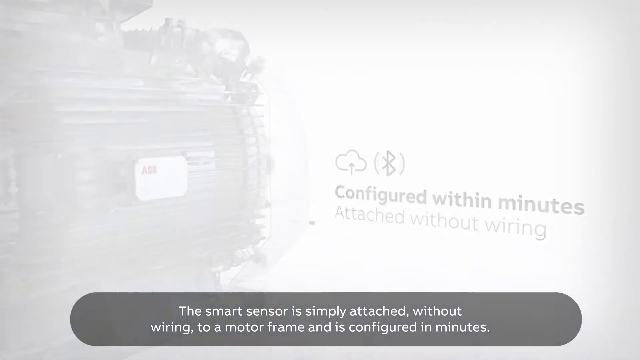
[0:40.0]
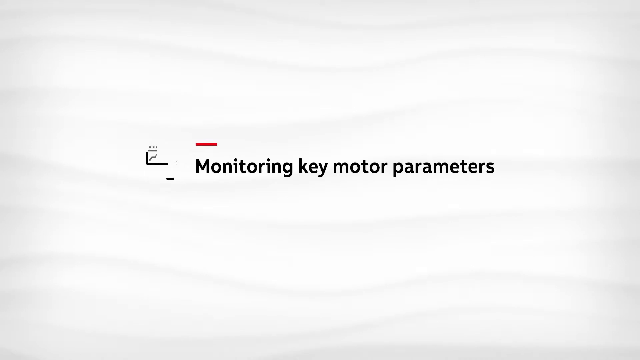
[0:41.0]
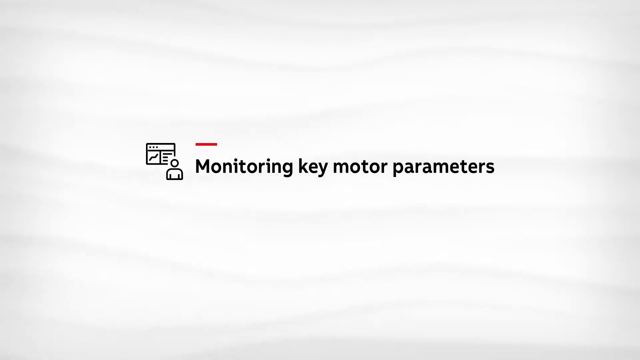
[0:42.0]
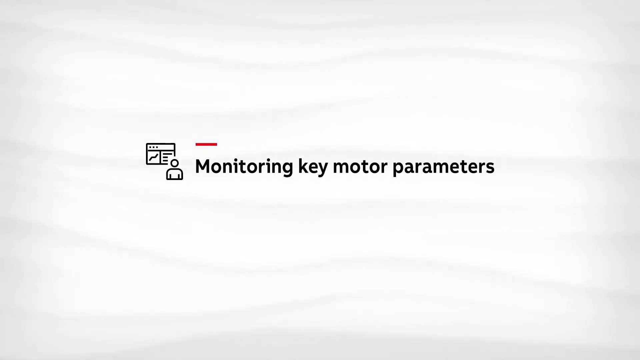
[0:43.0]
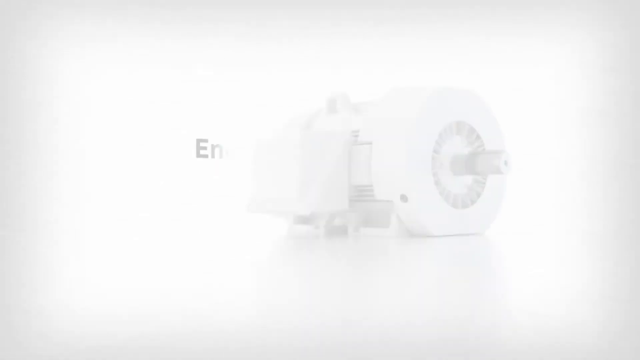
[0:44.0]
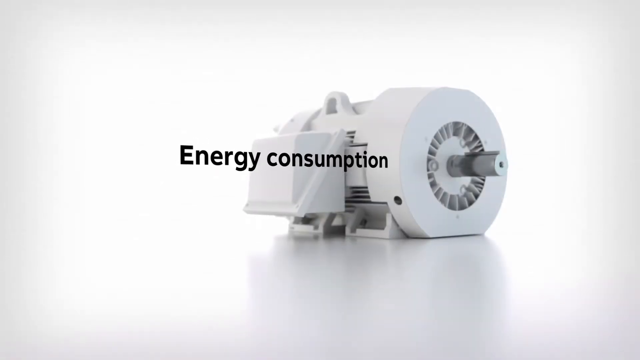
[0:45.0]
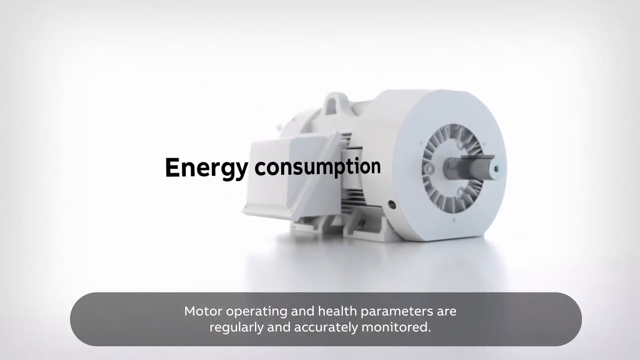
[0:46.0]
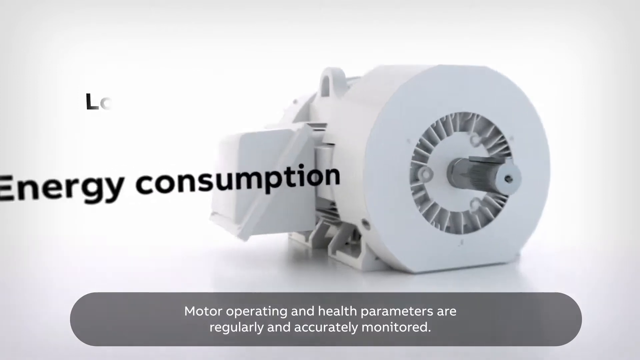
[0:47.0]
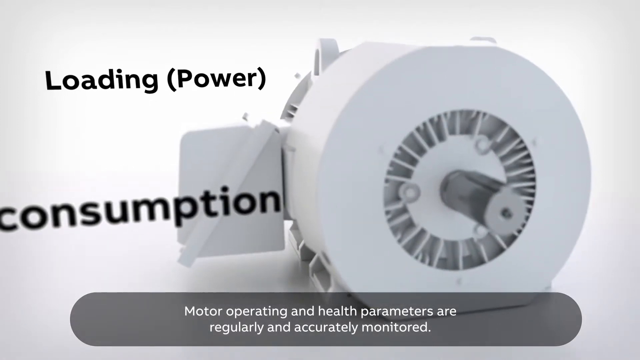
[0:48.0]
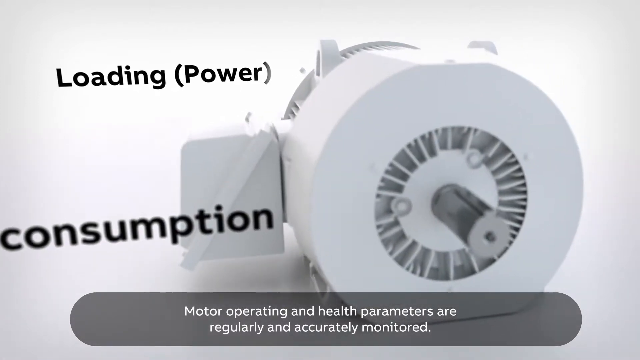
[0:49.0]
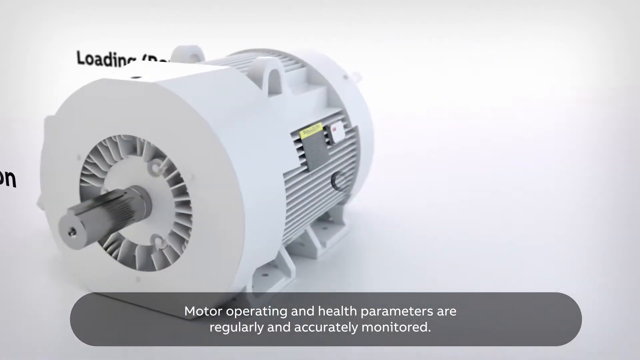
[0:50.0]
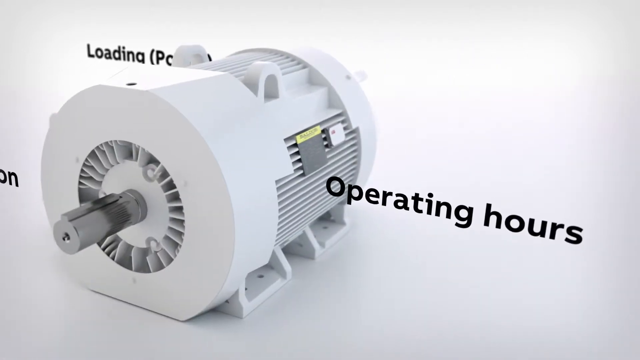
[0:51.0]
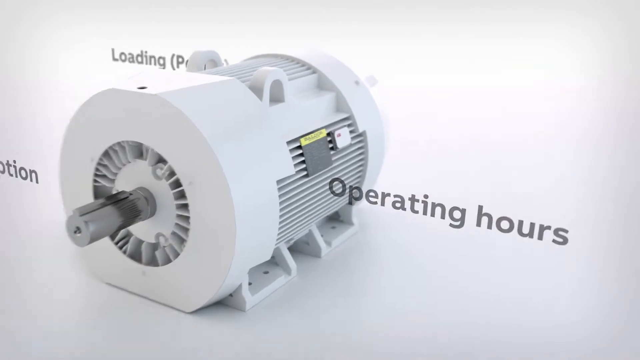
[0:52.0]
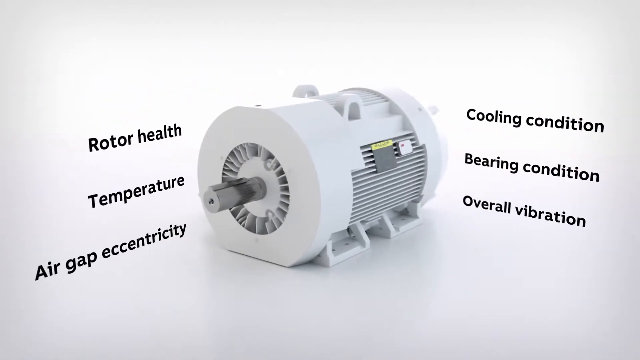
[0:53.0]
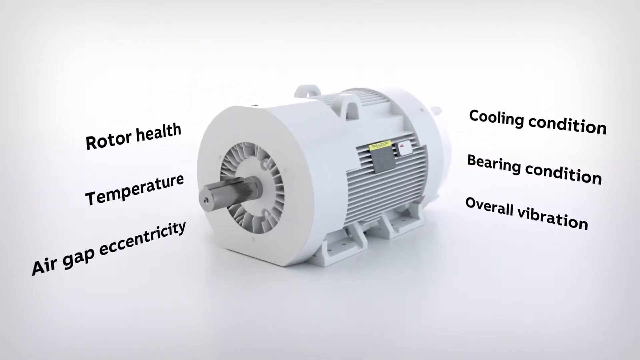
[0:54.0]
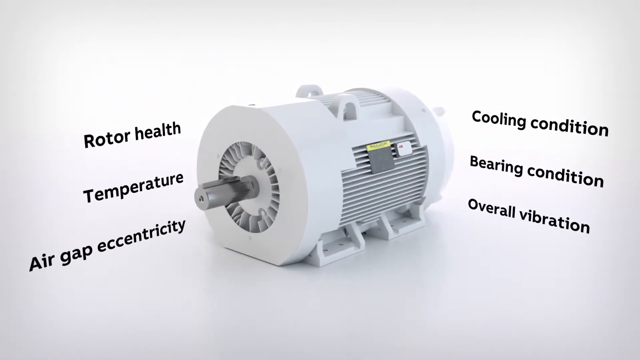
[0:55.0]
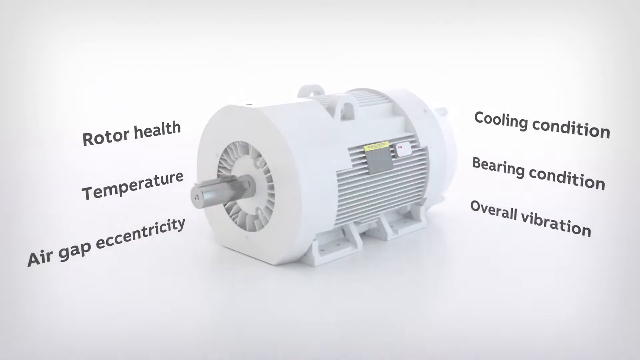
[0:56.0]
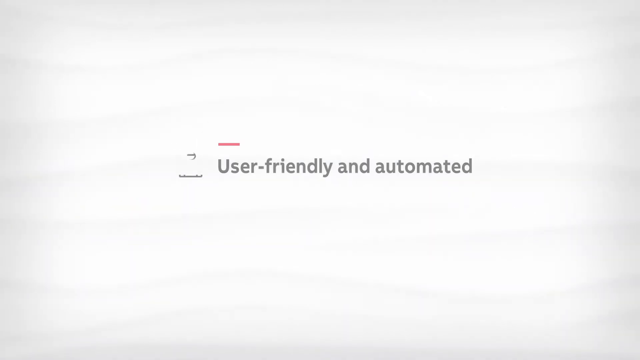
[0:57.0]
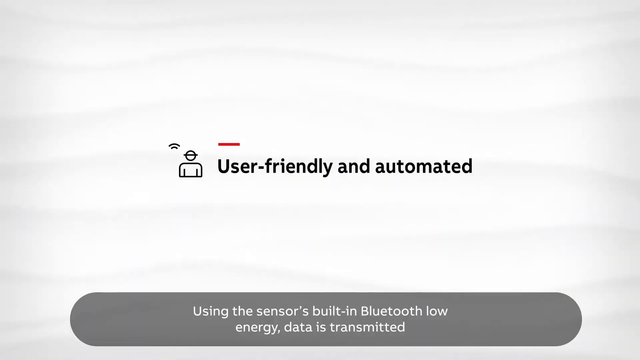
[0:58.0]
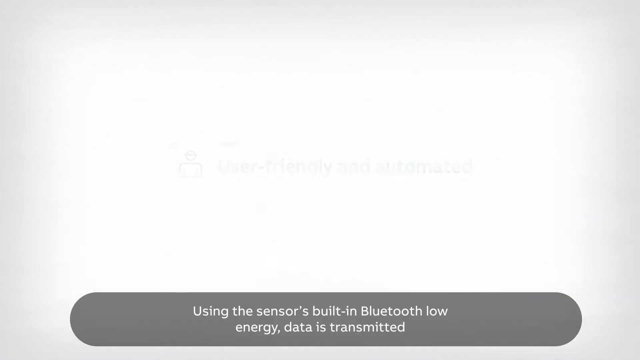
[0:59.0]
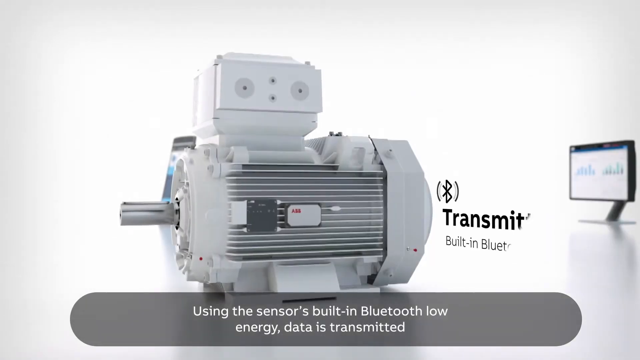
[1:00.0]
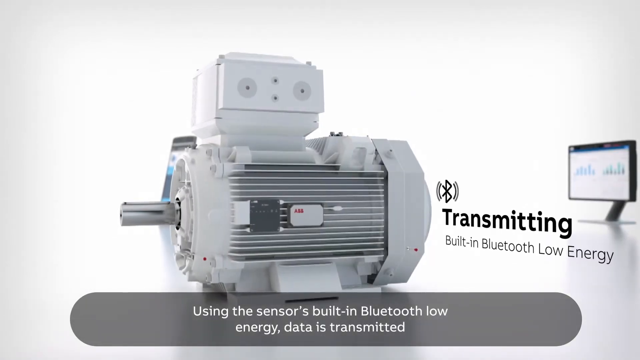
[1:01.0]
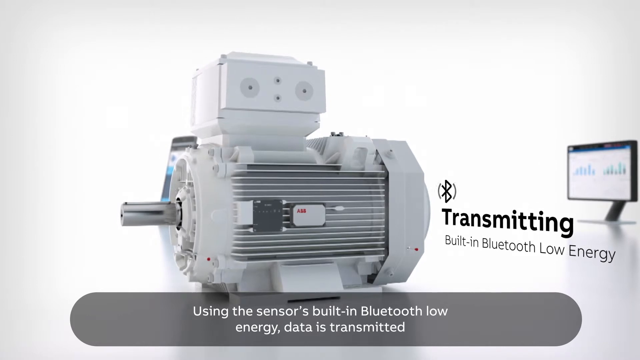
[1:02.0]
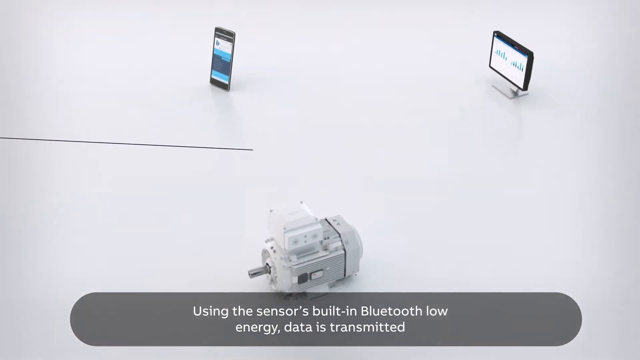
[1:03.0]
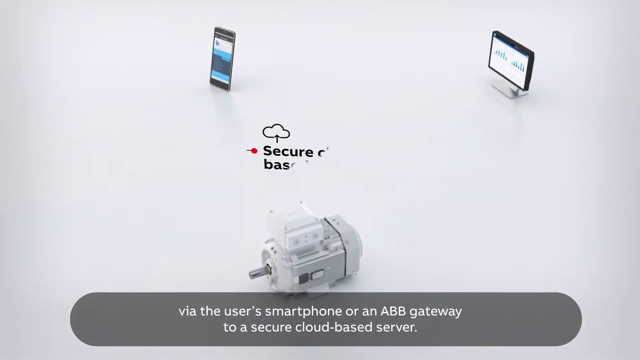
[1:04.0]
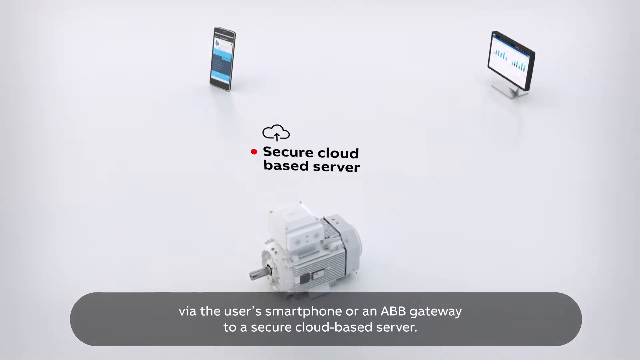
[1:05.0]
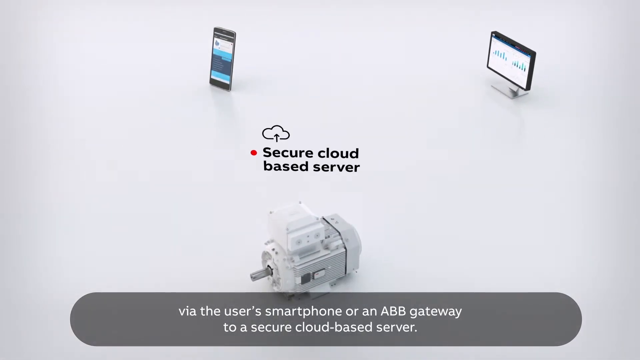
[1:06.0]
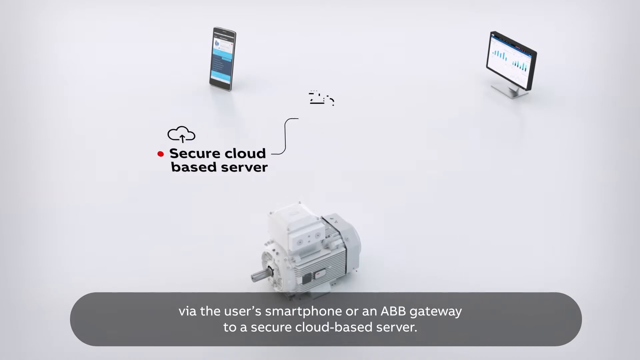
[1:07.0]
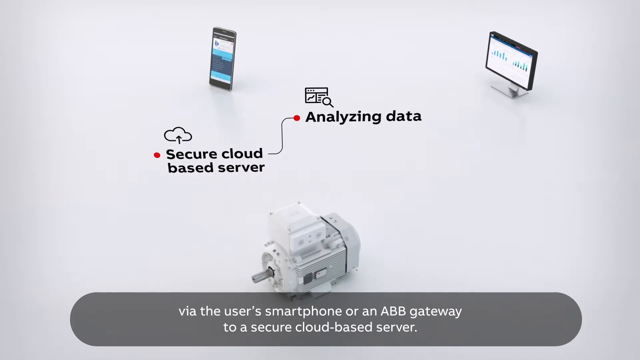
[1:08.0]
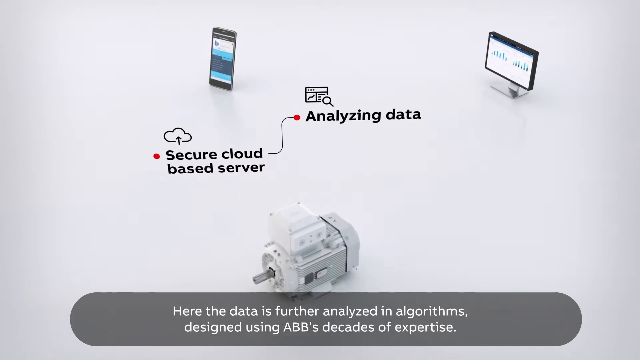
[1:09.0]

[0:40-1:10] Text appears on screen reading "monitoring key motor parameters," with a small clip-art-style chart and a human just to the left of it. Next comes "energy consumption" with a small electronic device. At the bottom of the screen is the text "motor operating and health parameters are regularly accurately monitored." The camera zooms into the machine; "loading power" appears in the background and "operating power" on the right side. This transitions to more text emanating from each side of the machine: on the top left, "rotor health, temperature, air gap, eccentricity," and on the right side, "cooling condition, bearing condition, overall vibration." The machine kind of rotates, and the text "user-friendly and automated" appears, with "using the sensor's built-in Bluetooth low energy data is transmitted" below it. Next comes "transmitting built-in Bluetooth technology." The camera zooms out to a bird's-eye view with a phone at the top left and a computer at the top right, and the text "secure cloud-based server." The bottom bar reads "via the server smartphone or an ABB gateway to secure cloud-based server." After that, "analyzing data" appears, along with "Here the data is further analyzed and algorithms designed using ABB's decades of expertise."